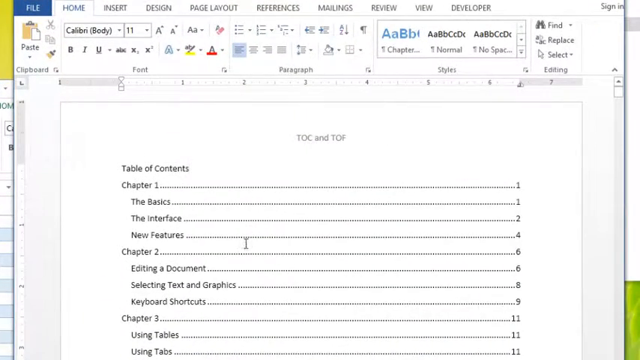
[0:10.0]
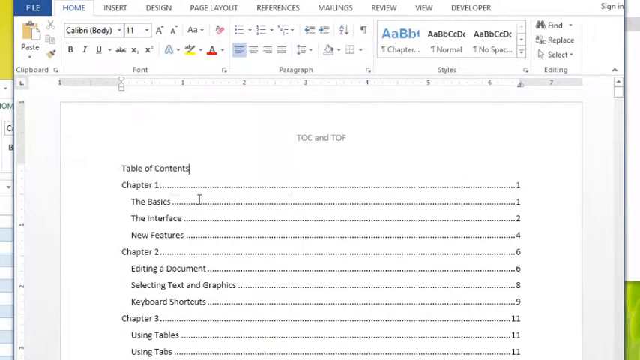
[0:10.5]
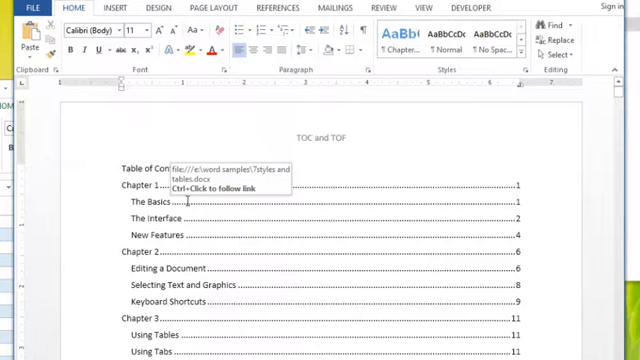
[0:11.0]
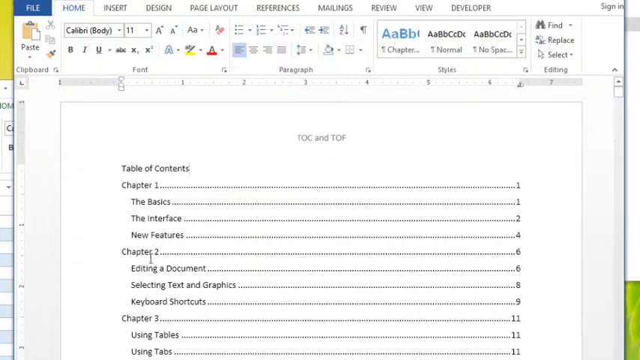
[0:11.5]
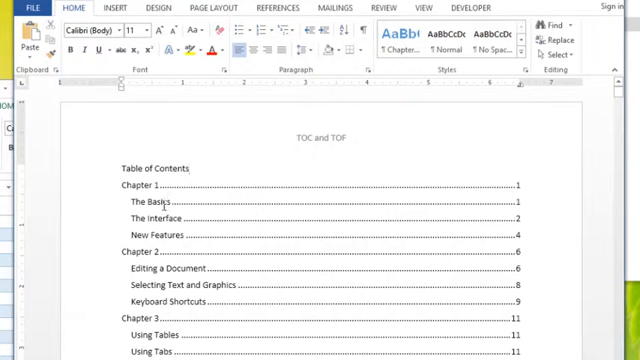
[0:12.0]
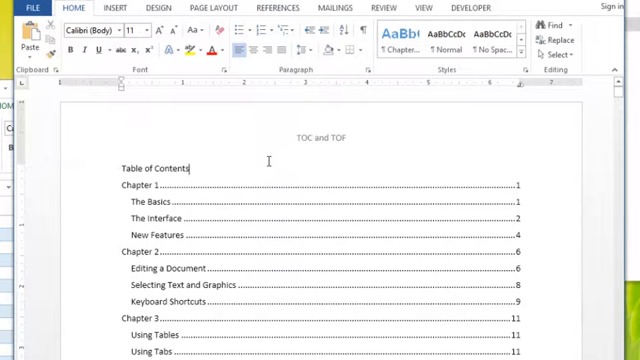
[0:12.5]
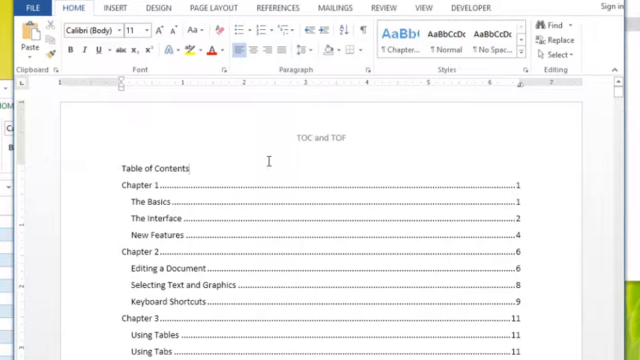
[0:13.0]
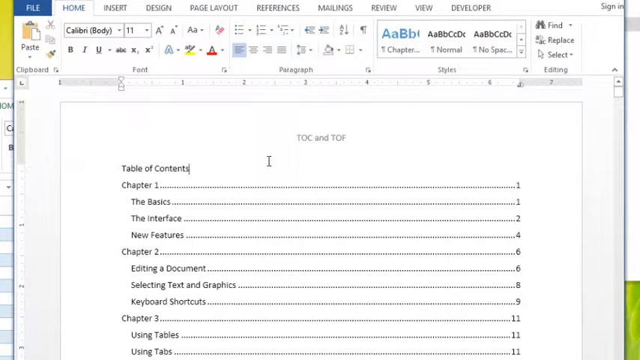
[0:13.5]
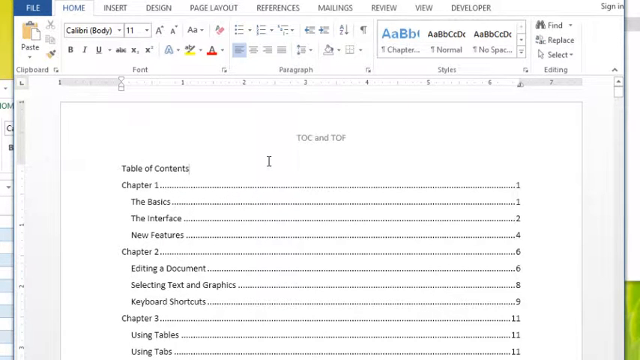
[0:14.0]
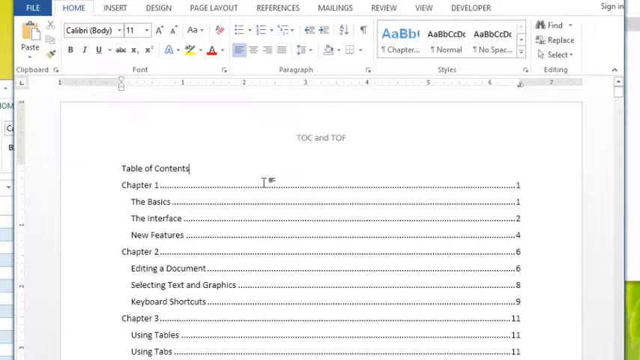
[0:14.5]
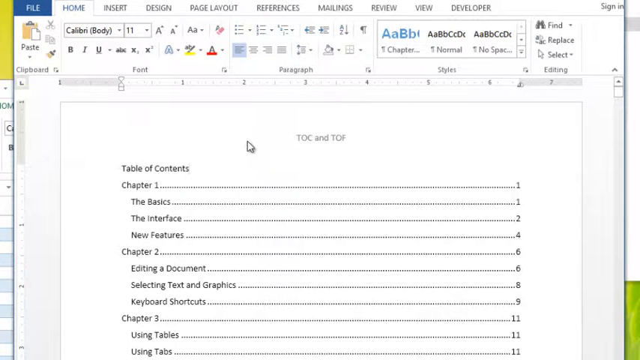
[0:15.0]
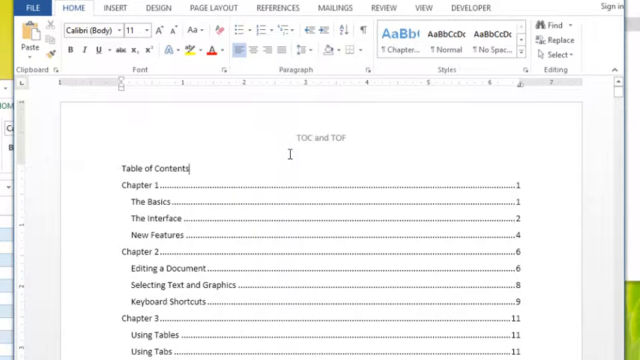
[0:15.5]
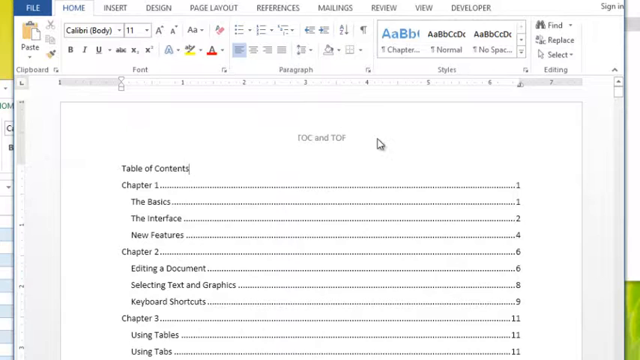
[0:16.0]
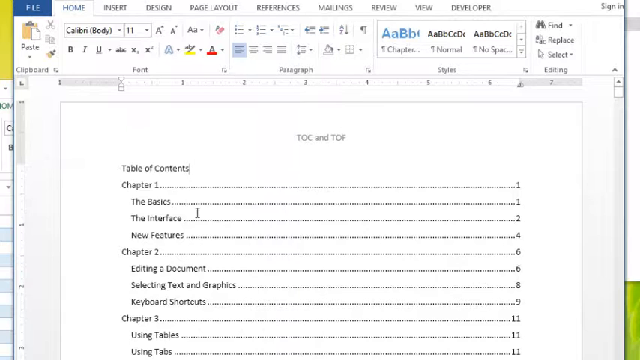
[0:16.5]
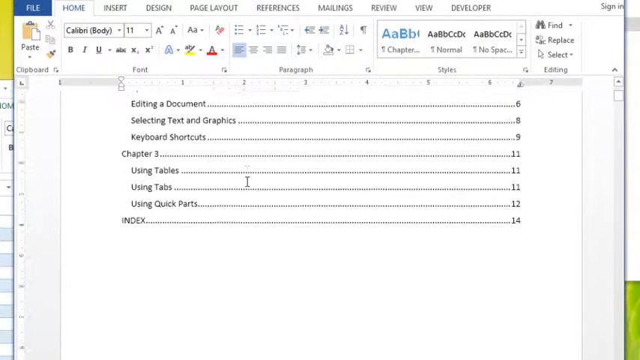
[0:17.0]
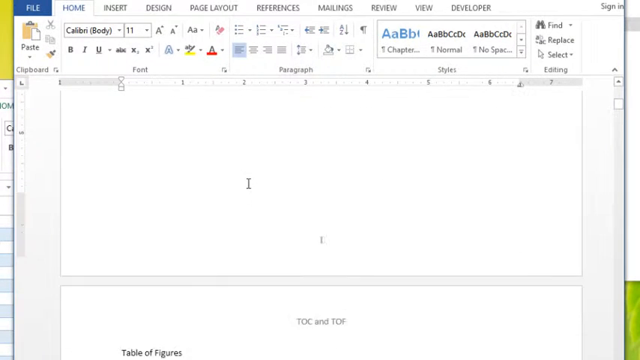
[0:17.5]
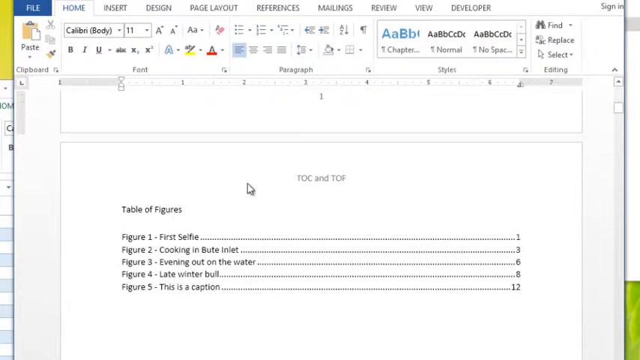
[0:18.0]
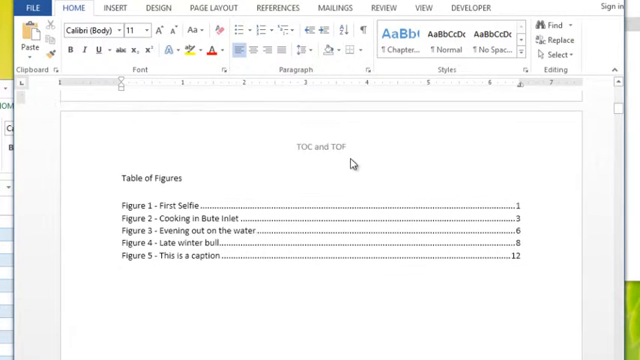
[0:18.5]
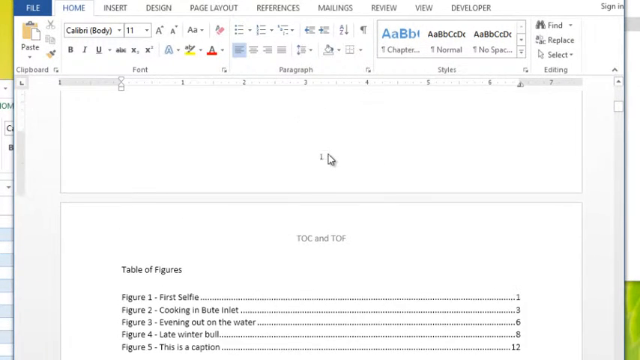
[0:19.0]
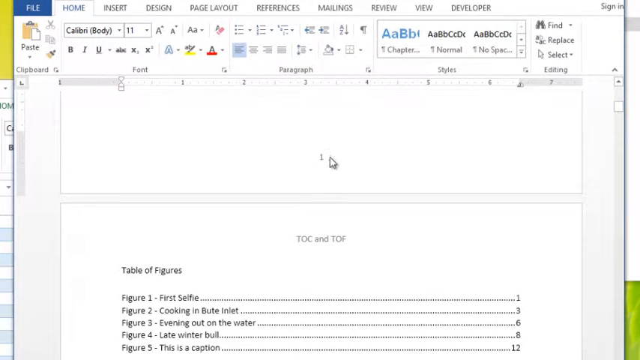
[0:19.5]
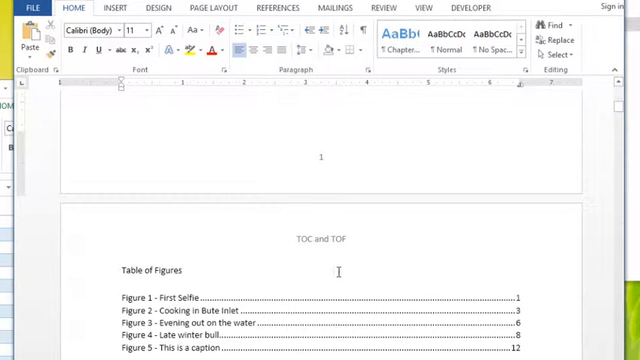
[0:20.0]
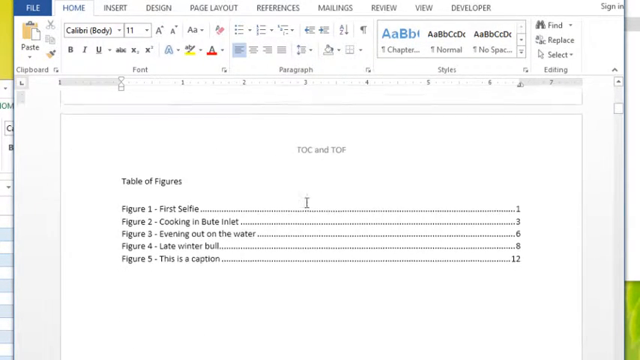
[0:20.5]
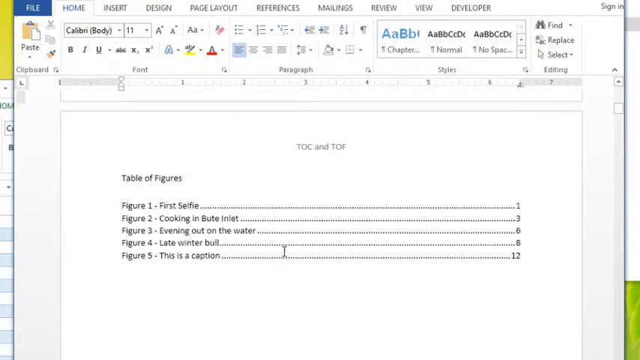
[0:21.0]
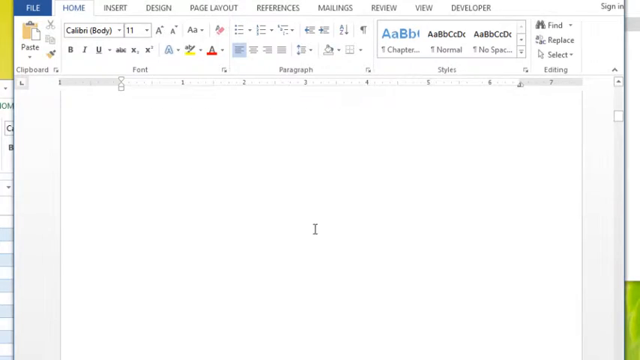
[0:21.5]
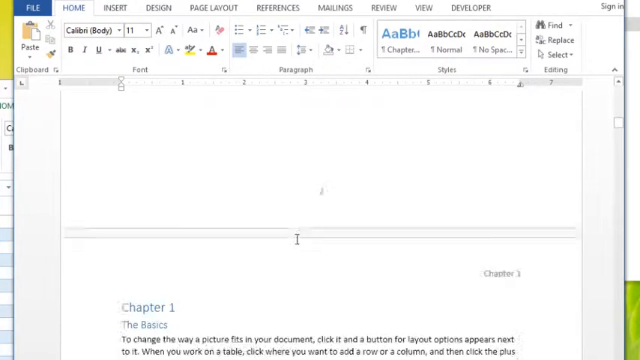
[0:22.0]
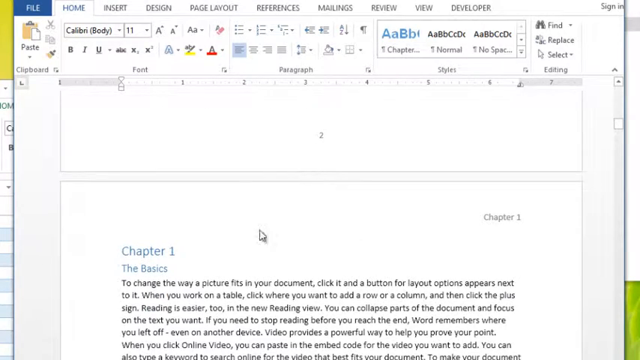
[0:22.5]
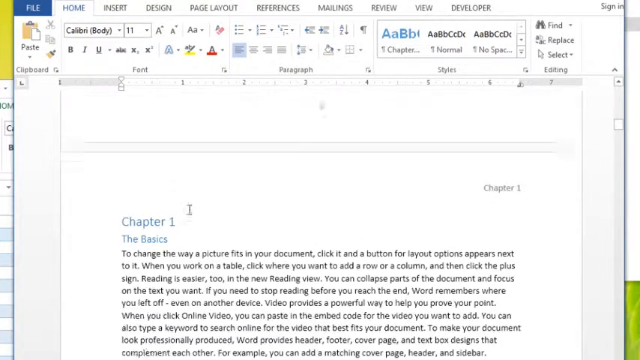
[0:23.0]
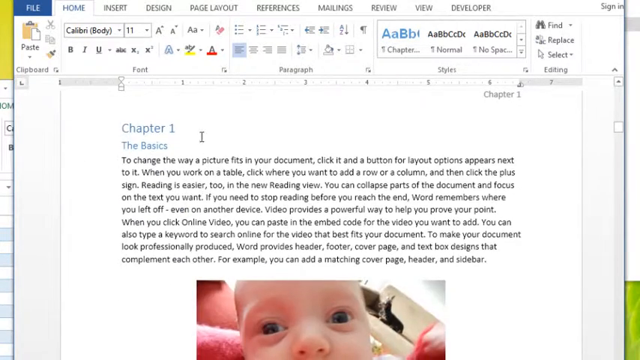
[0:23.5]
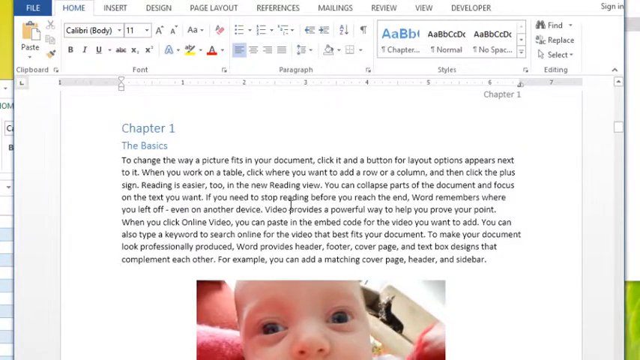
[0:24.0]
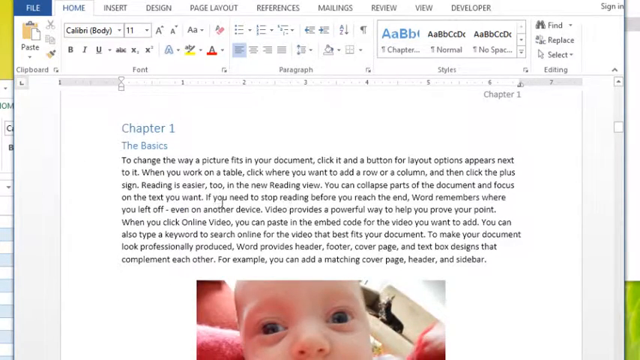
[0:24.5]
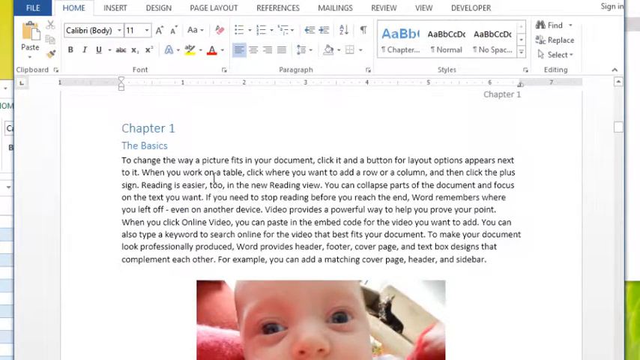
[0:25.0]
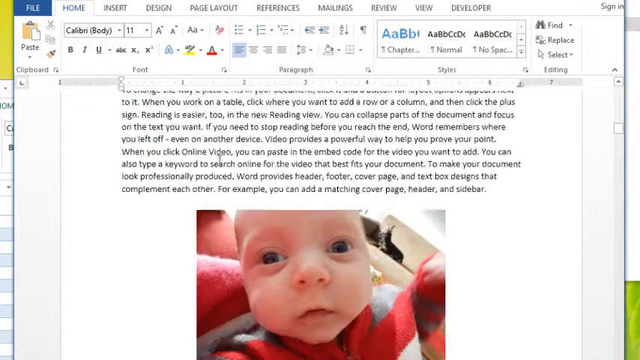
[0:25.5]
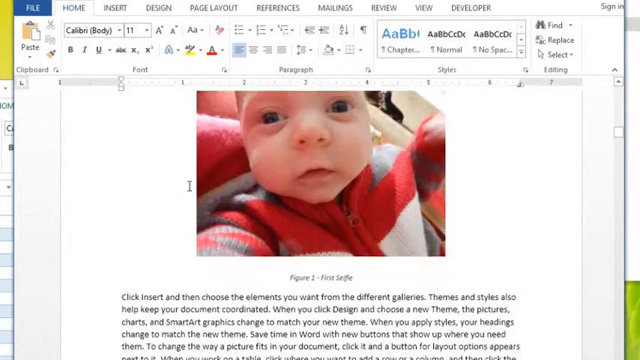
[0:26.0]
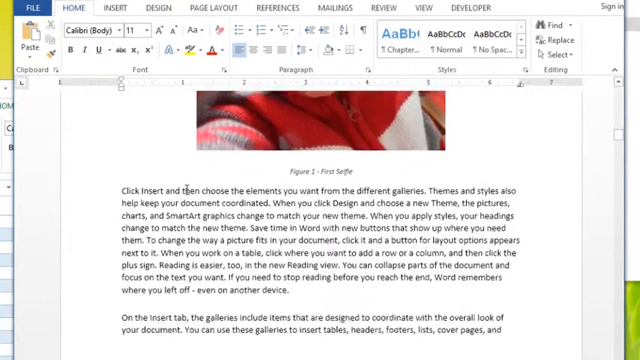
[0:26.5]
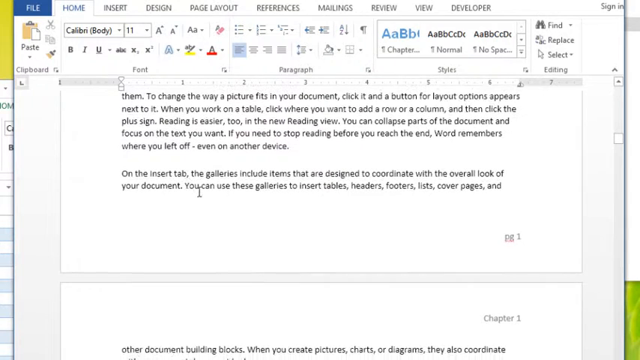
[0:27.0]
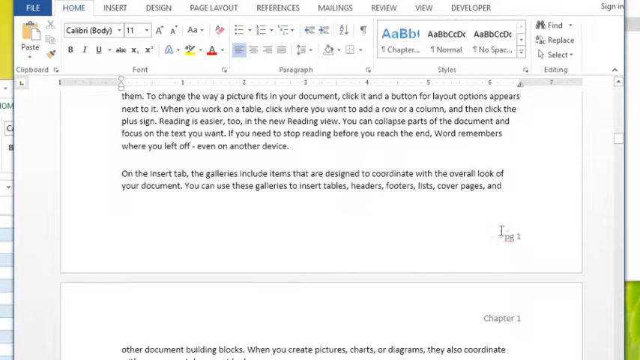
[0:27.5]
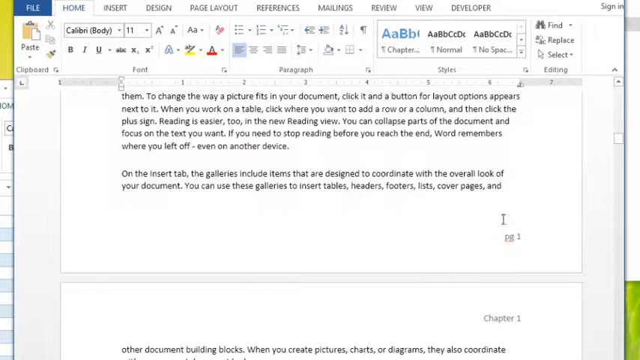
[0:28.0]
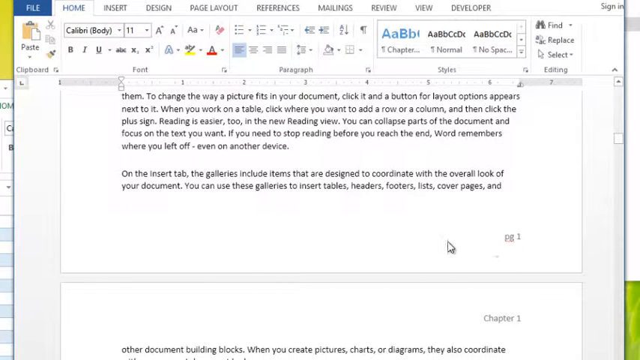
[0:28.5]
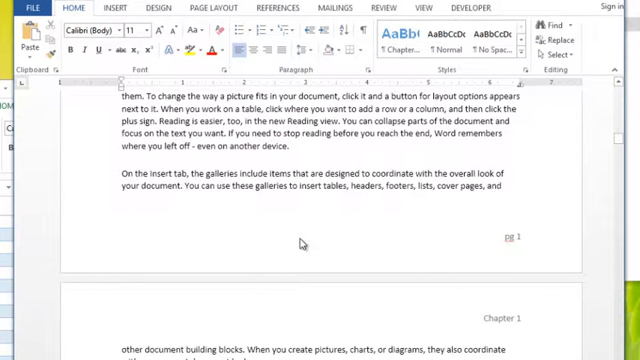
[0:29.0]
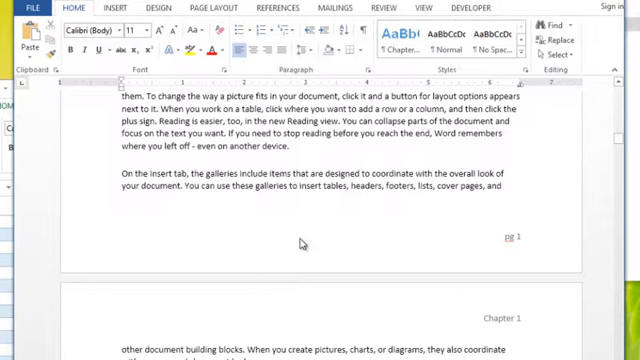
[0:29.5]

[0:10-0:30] A Microsoft Word document is shown in which someone apparently has already typed up content, including a table of contents. The pages are numbered: in the beginning part, the numbers are in the middle at the bottom of the pages, and once the first chapter starts, page one and page two appear on the bottom right side of the pages. The table of contents lists chapter one and its different parts, followed by chapter two and its parts. The view scrolls down into chapter one, which includes photos.